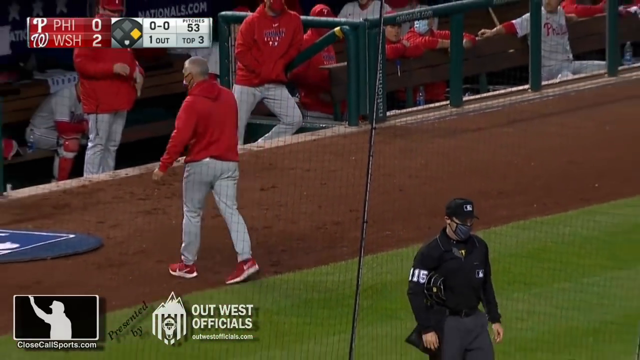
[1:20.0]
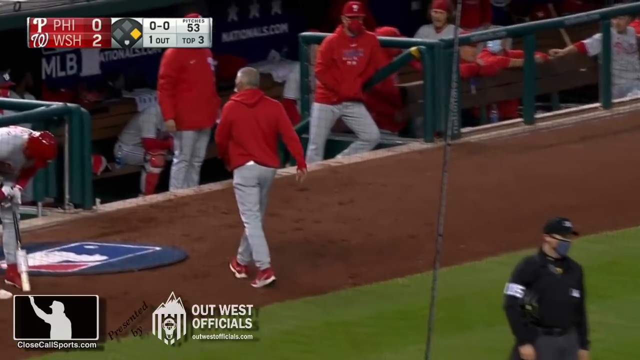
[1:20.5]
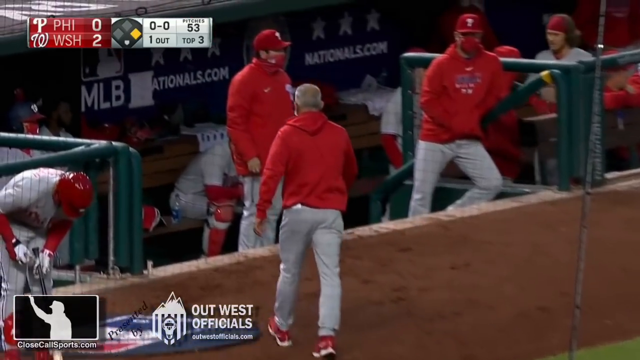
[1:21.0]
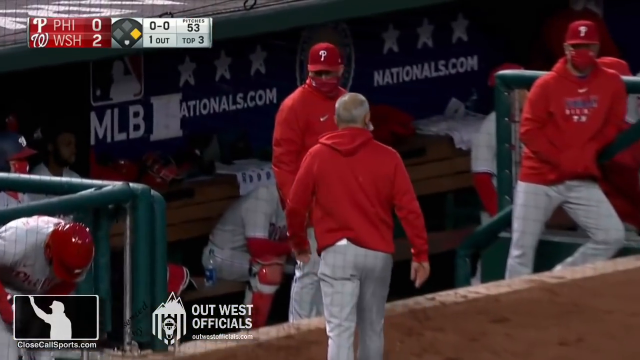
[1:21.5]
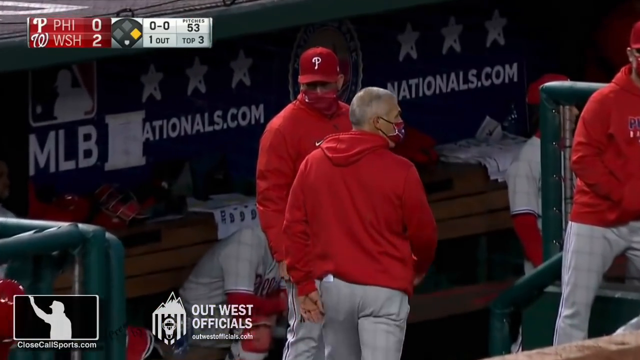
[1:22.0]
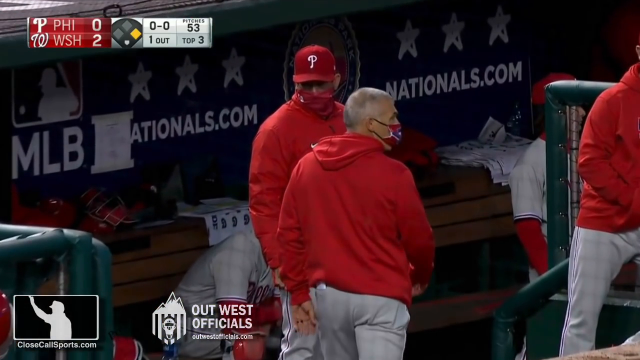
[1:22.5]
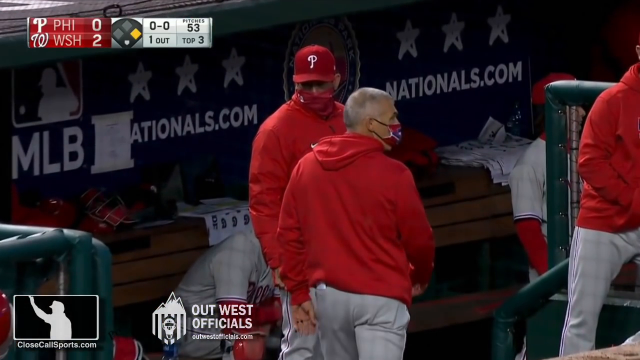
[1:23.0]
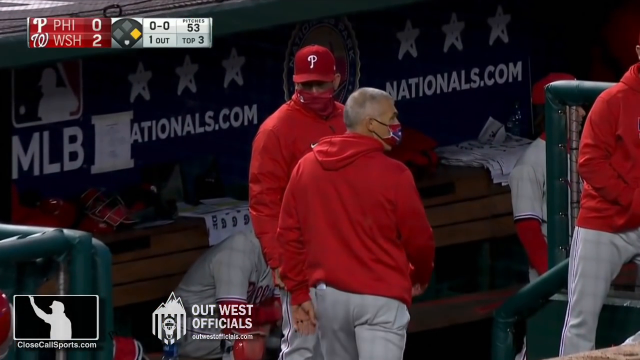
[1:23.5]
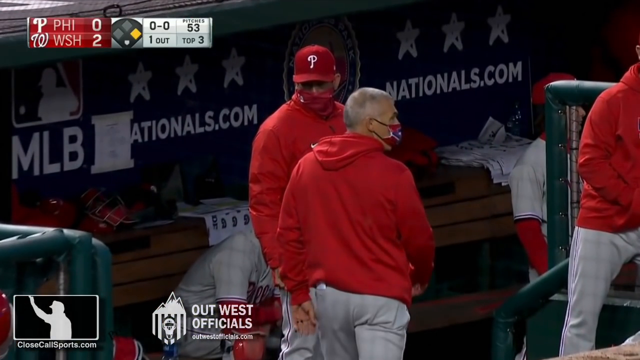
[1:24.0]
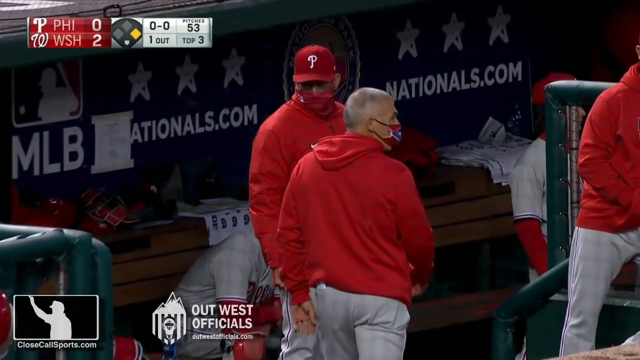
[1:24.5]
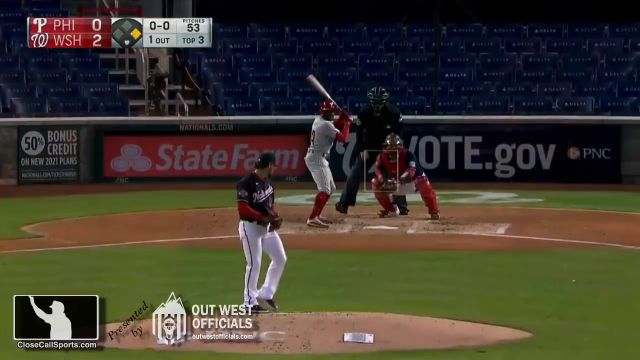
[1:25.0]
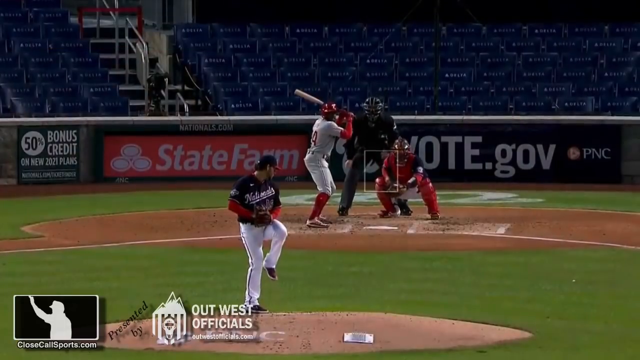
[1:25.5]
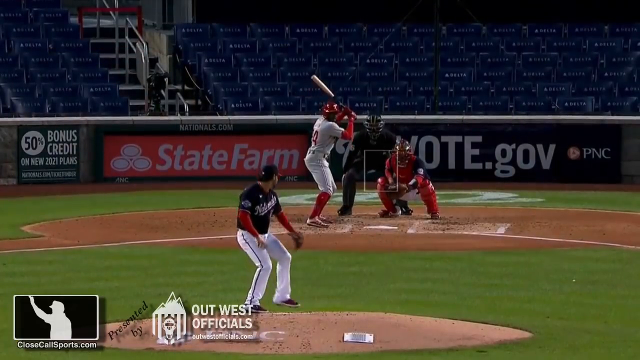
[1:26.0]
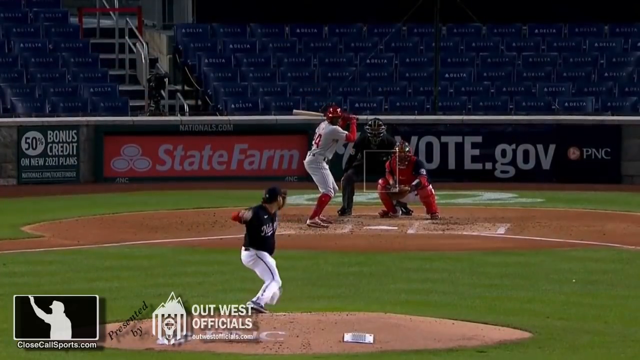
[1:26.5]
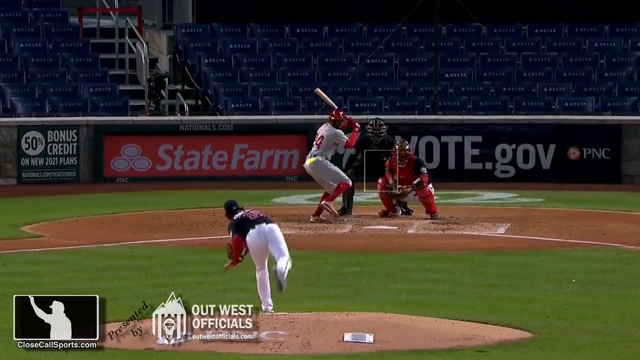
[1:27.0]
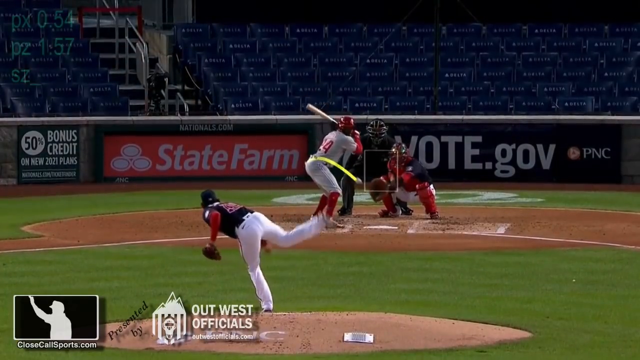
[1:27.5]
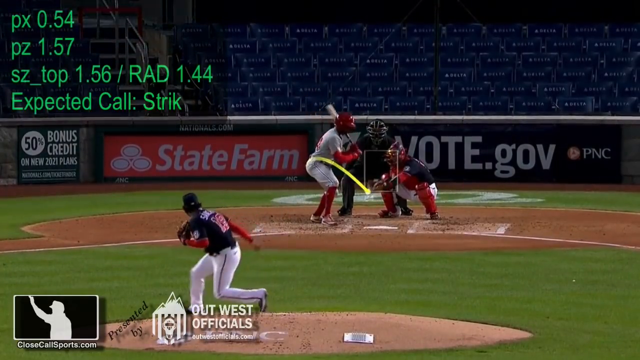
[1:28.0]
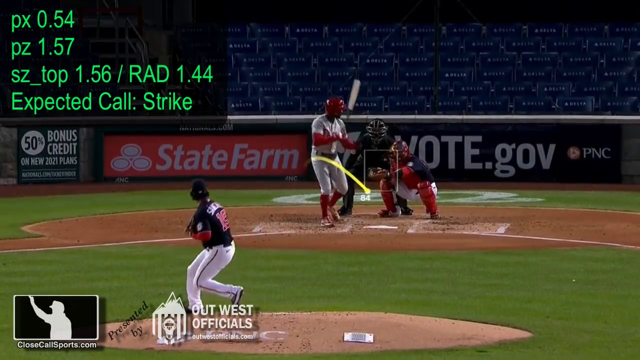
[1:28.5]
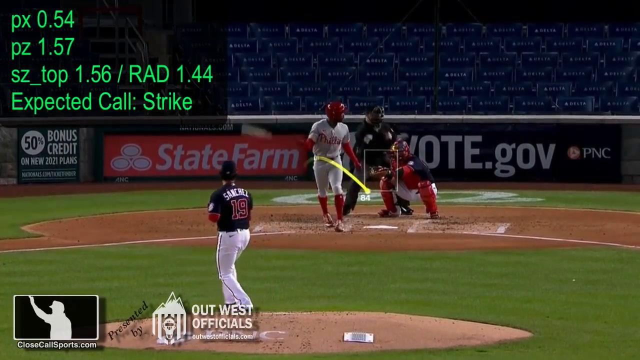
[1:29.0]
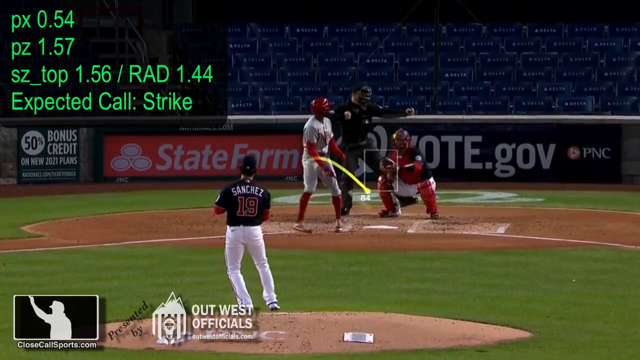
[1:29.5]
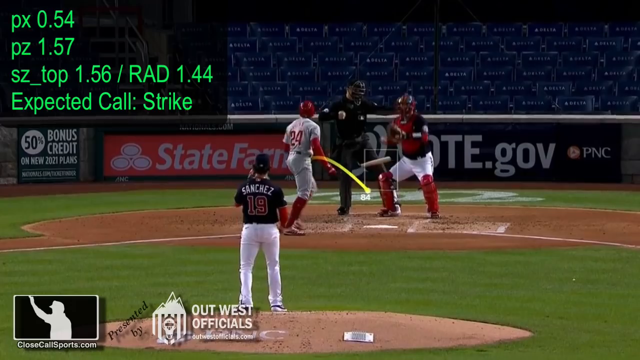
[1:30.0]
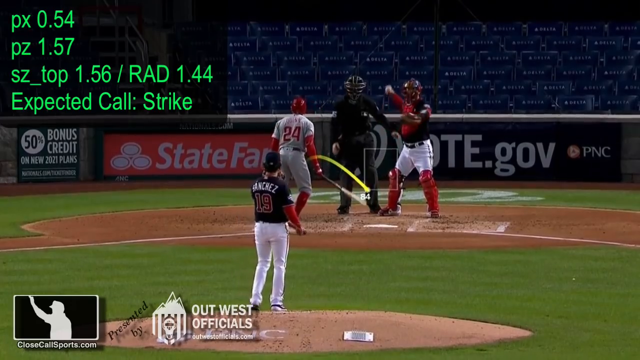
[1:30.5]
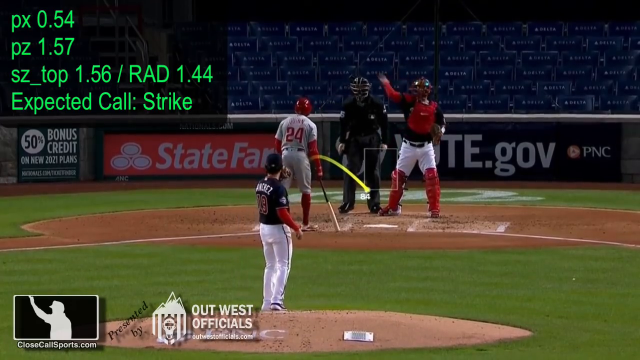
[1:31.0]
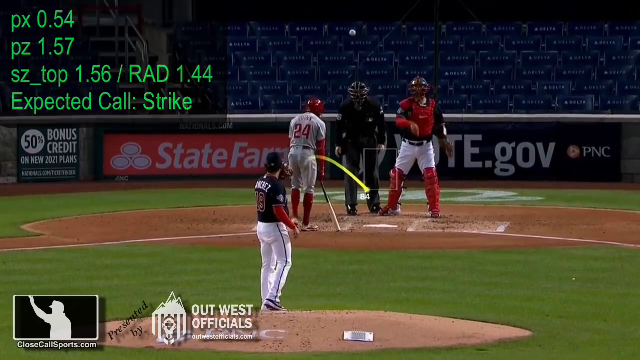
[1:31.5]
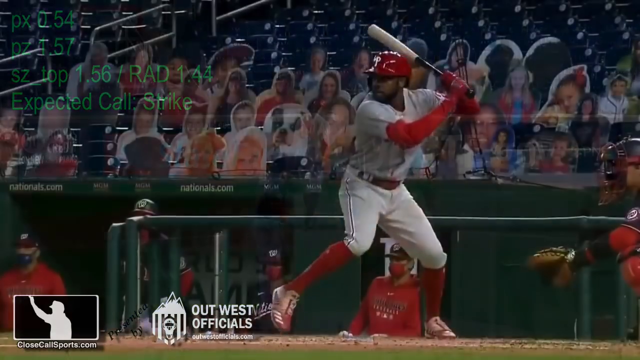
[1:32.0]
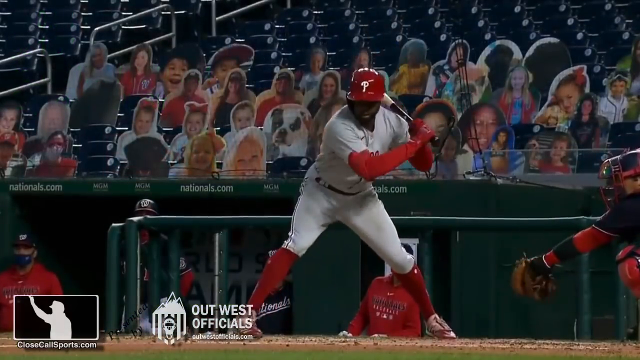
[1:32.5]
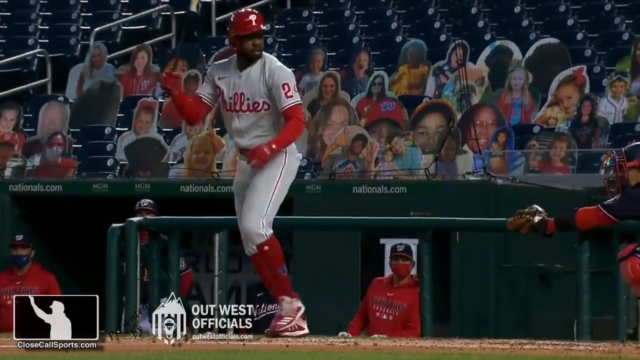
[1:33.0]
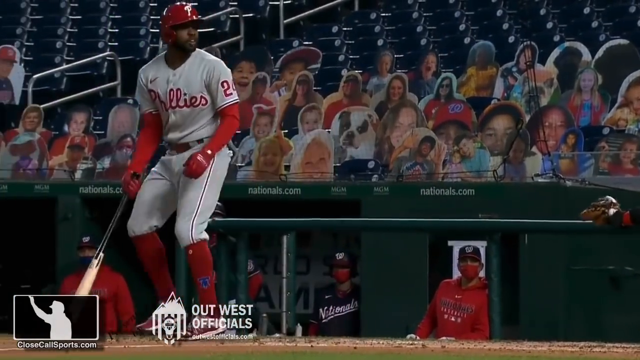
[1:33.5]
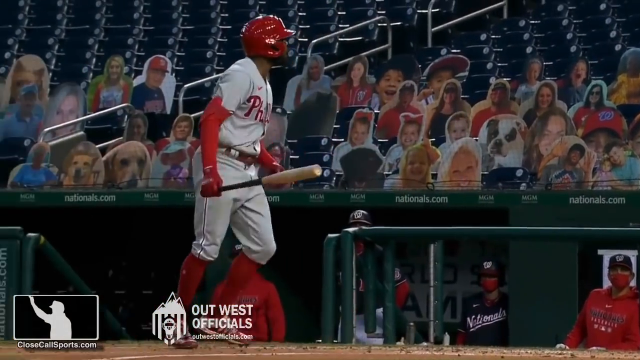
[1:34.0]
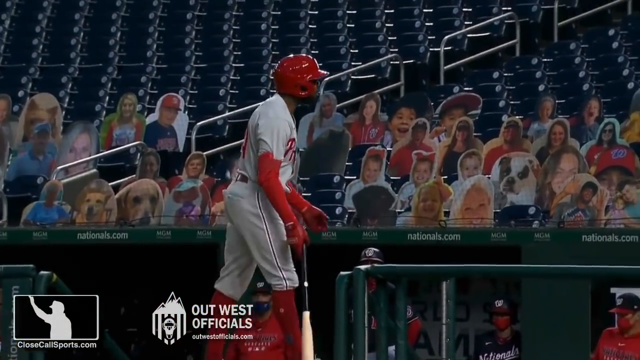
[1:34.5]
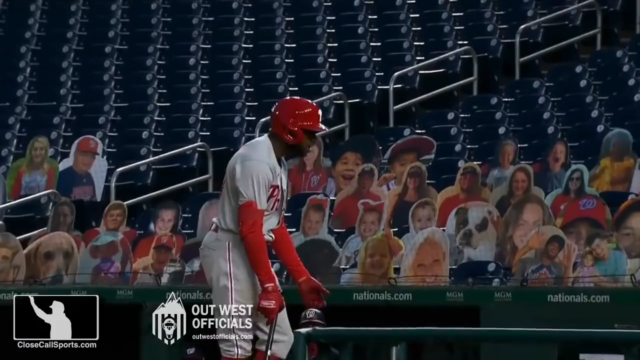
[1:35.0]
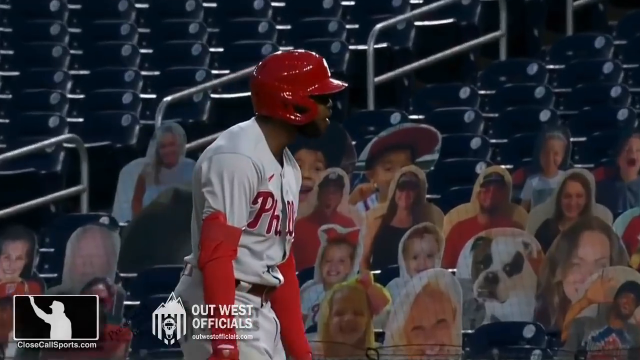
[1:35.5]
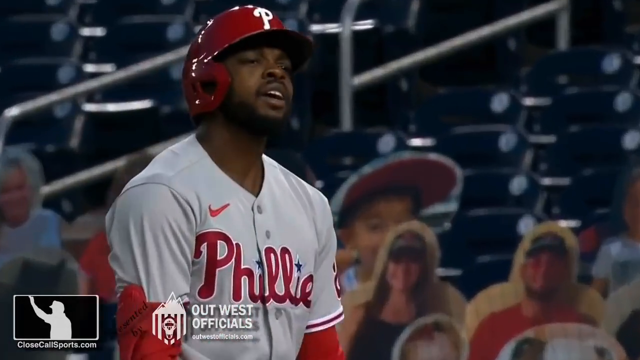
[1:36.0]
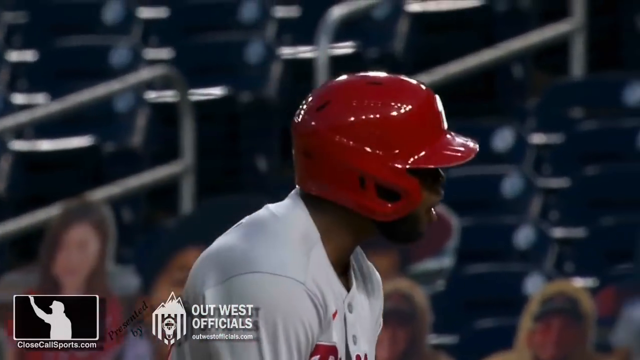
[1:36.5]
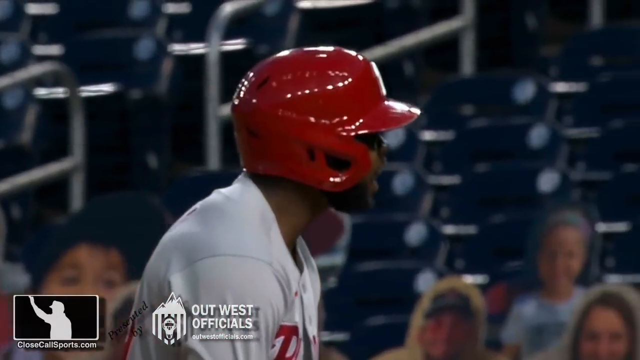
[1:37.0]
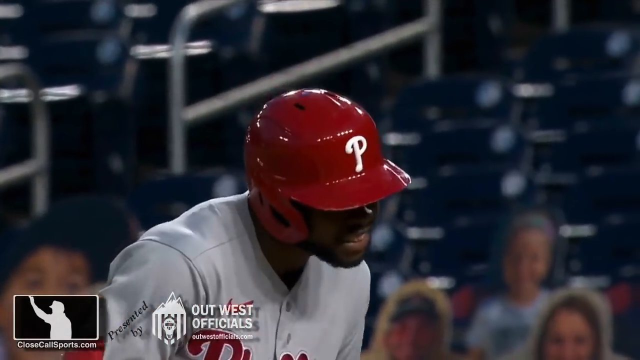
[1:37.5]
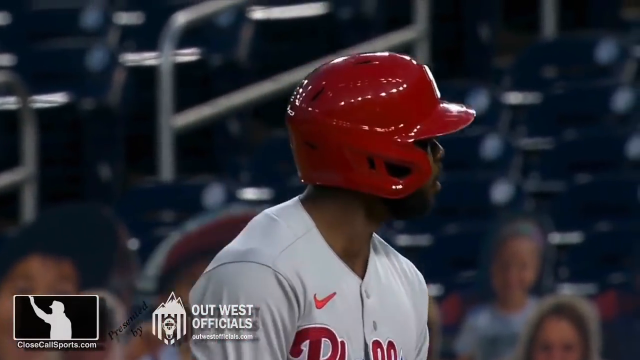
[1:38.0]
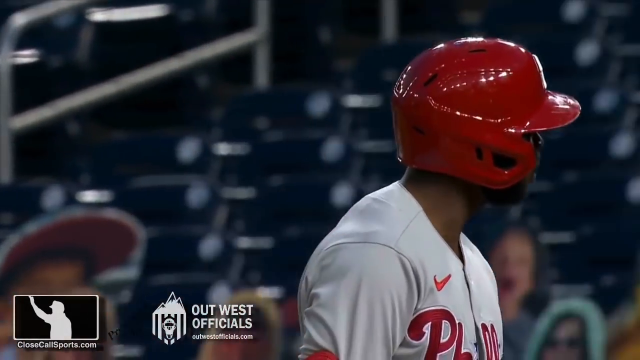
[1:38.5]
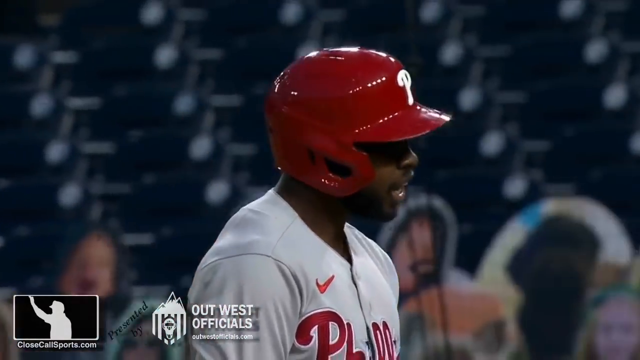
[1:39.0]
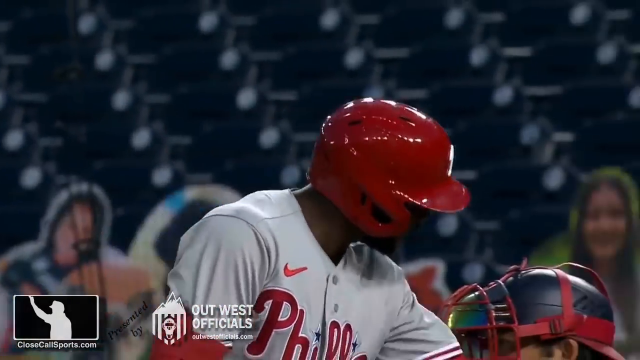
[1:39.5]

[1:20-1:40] A Major League Baseball game is underway, with "nationals.com" visible. Some of the people in the stands are cardboard cutouts, and the coach and the referee wear masks, suggesting this may be during COVID-19. The coach, angry about the strike calls, has left and gone to sit down. Bright green text on a darker background in the upper left corner reads "PX 0.54, PZ 1.57, SZ_top 1.56, RAD 1.44" and "expected call is strike". The batter, very upset, walks back, and the coach or manager is also upset with the referee.